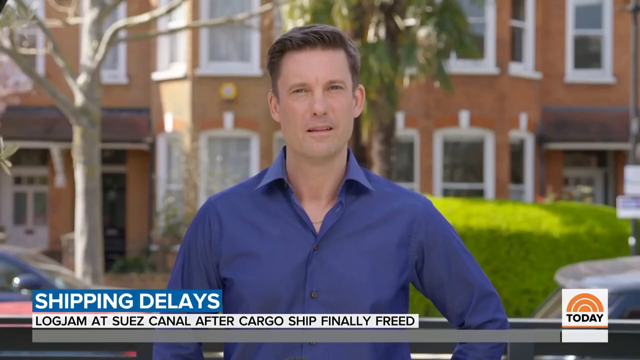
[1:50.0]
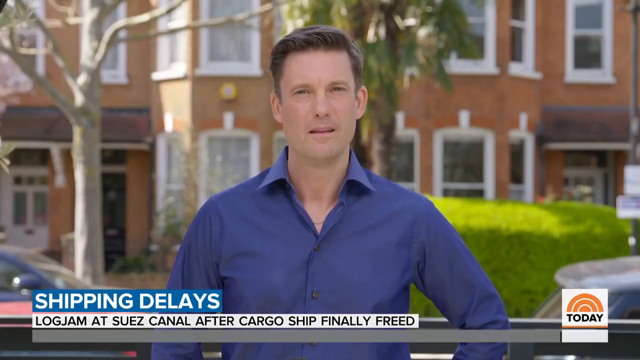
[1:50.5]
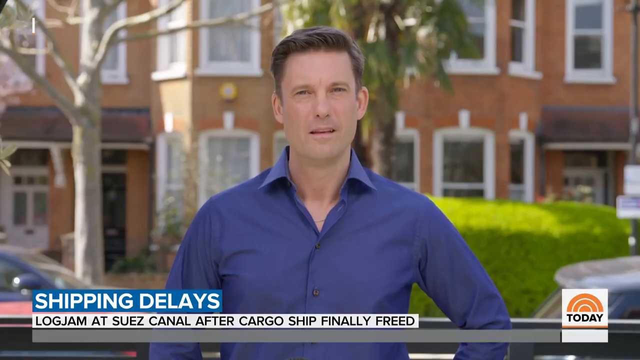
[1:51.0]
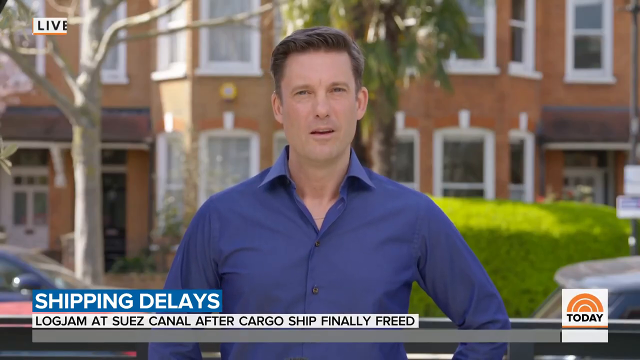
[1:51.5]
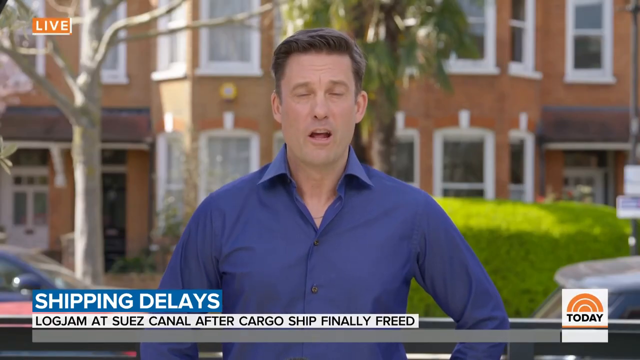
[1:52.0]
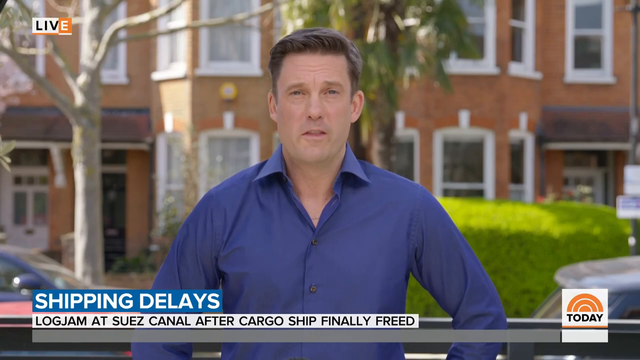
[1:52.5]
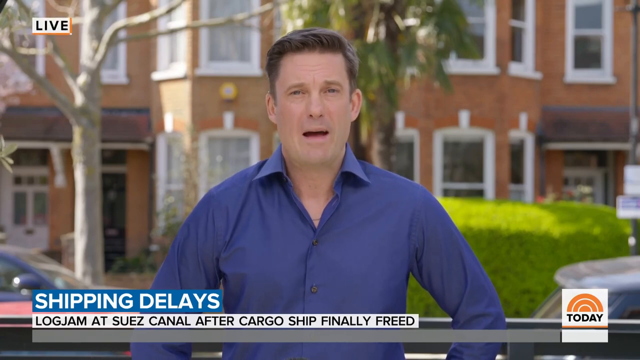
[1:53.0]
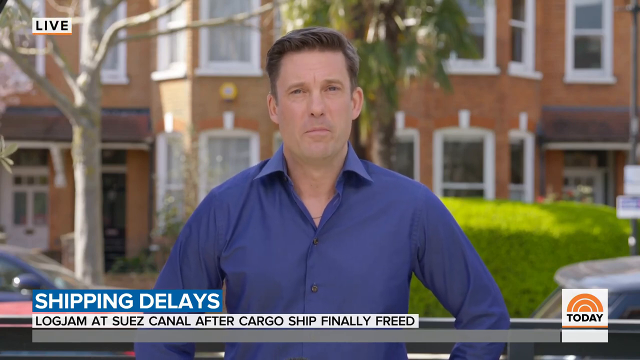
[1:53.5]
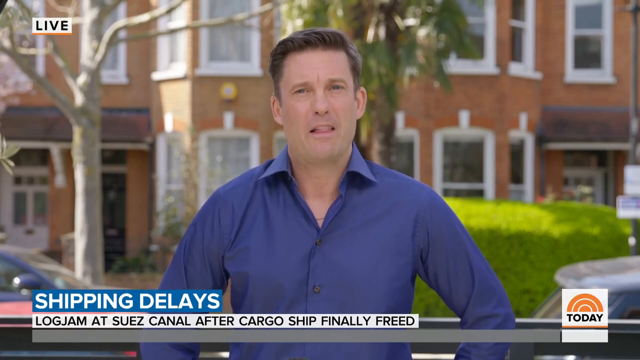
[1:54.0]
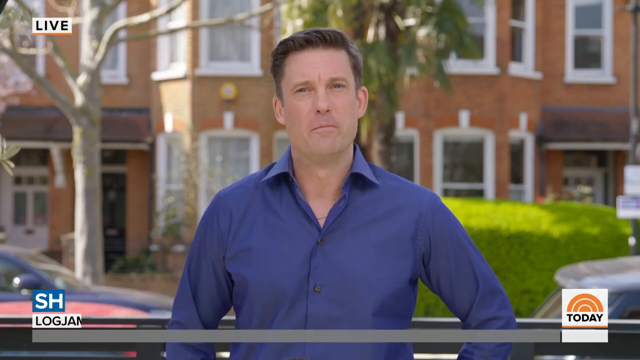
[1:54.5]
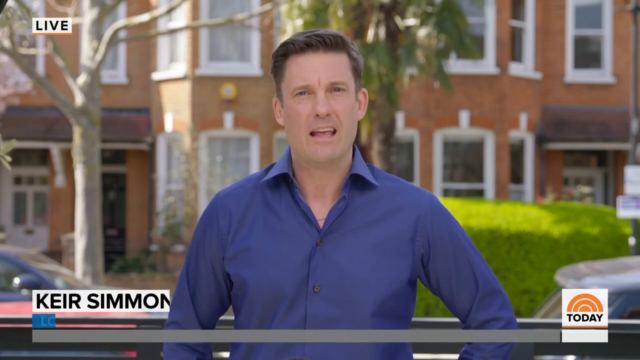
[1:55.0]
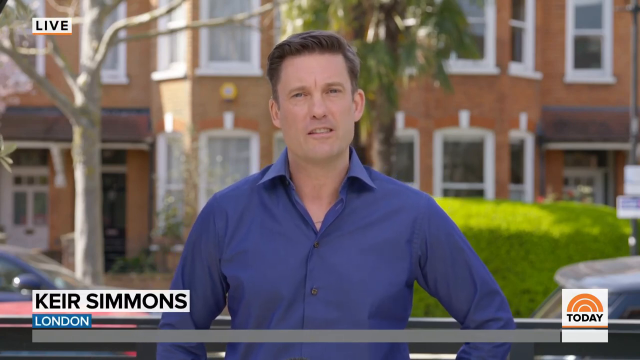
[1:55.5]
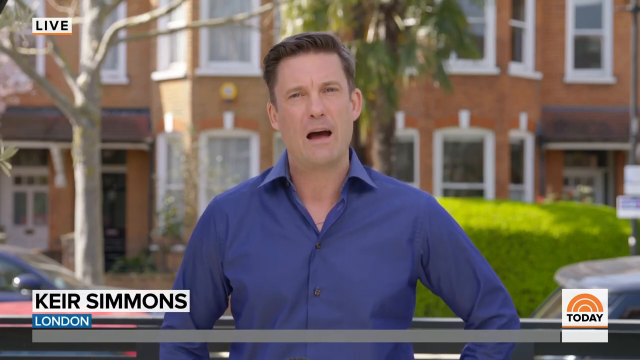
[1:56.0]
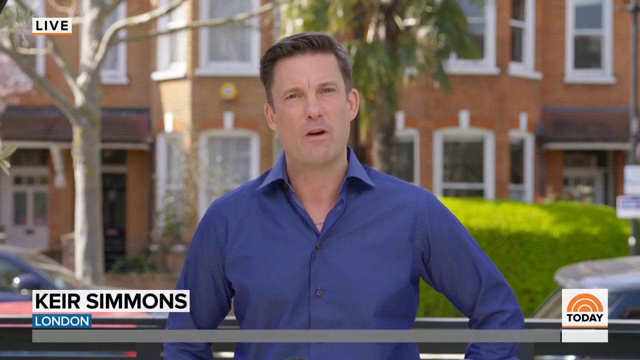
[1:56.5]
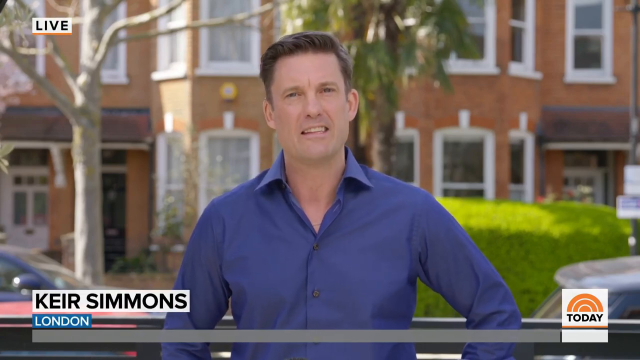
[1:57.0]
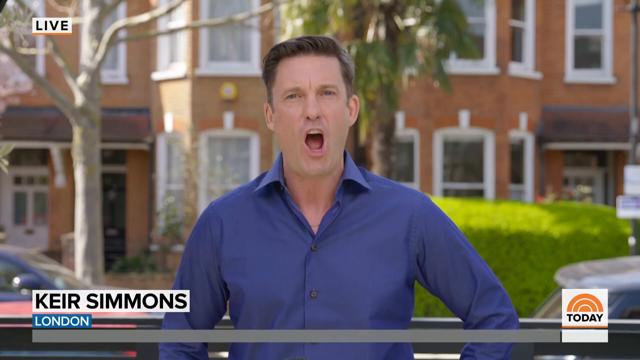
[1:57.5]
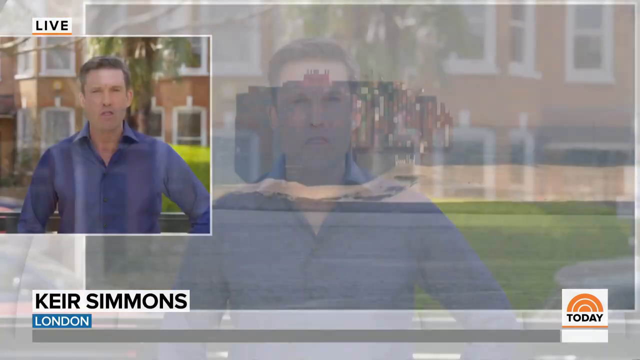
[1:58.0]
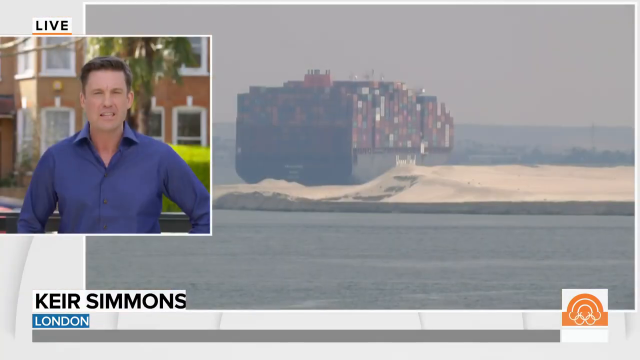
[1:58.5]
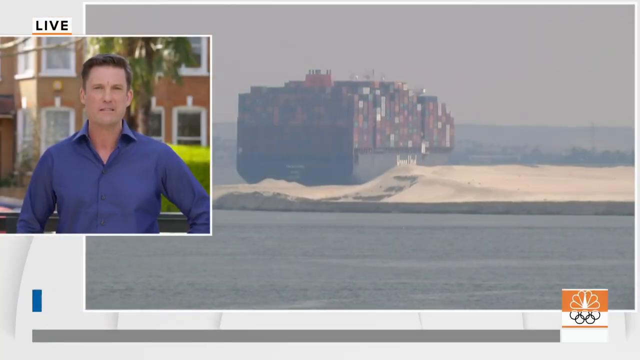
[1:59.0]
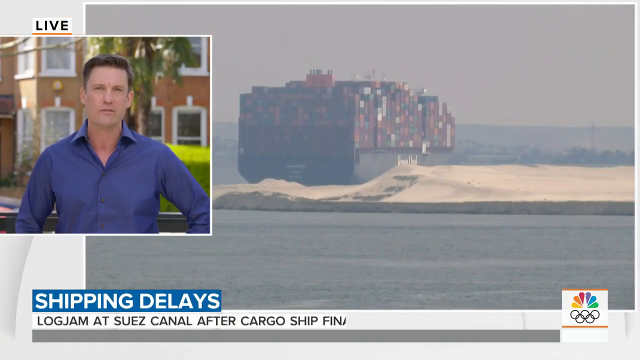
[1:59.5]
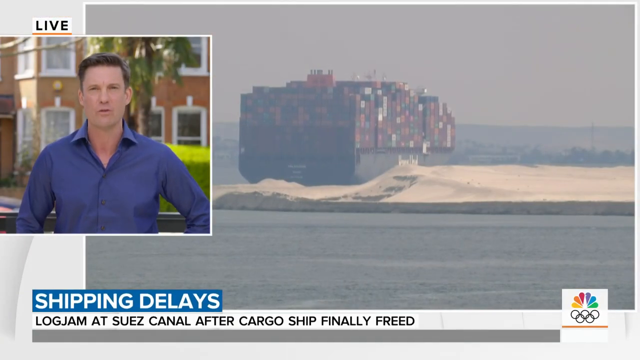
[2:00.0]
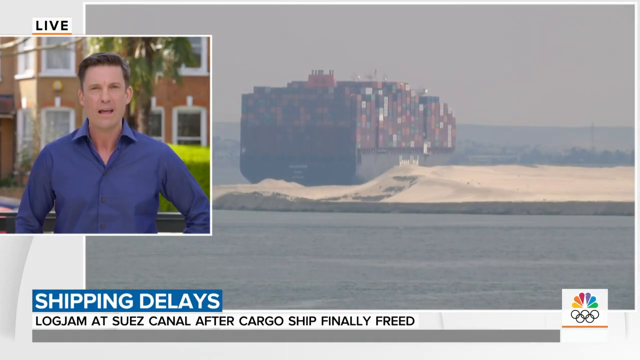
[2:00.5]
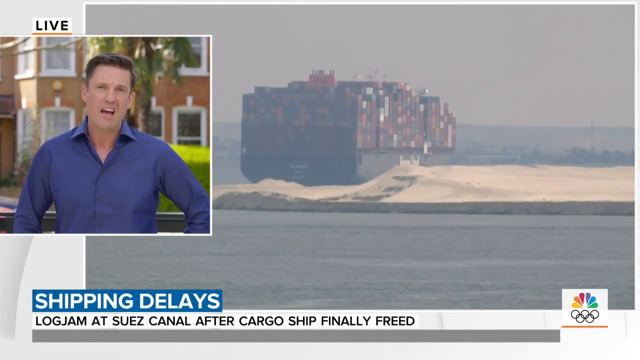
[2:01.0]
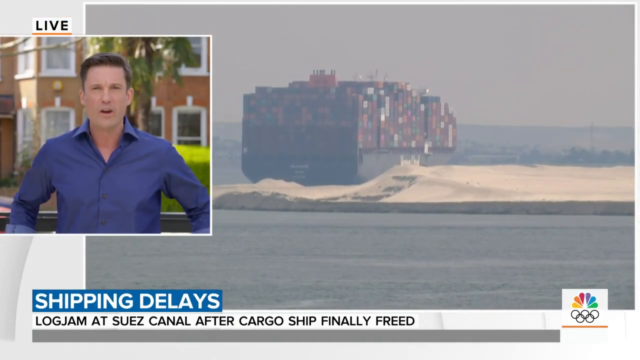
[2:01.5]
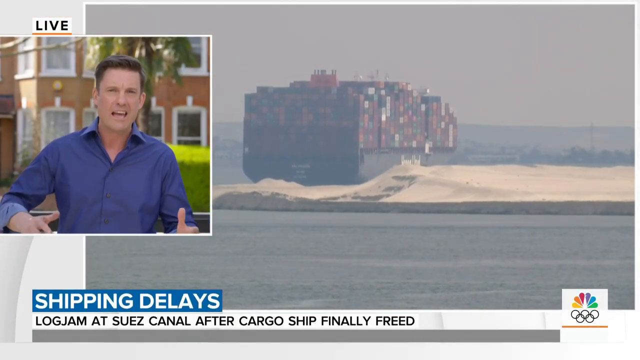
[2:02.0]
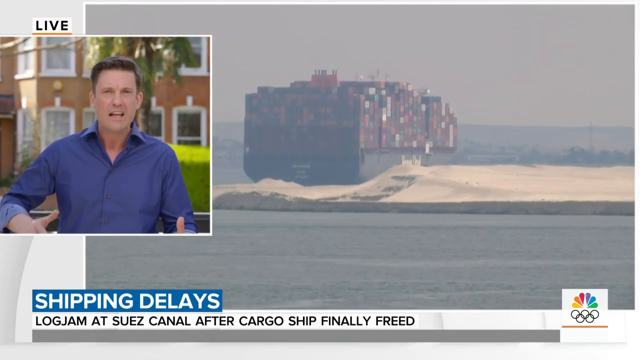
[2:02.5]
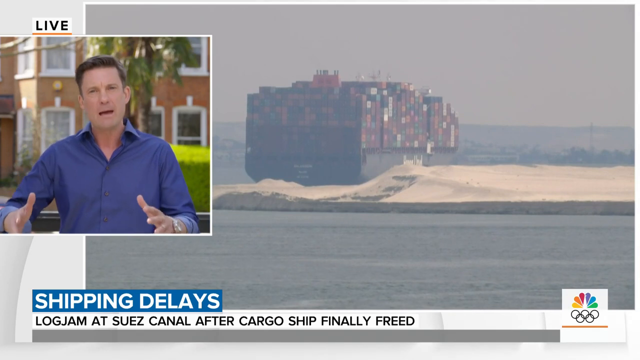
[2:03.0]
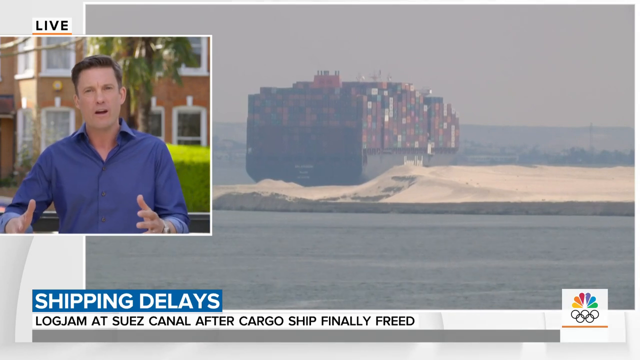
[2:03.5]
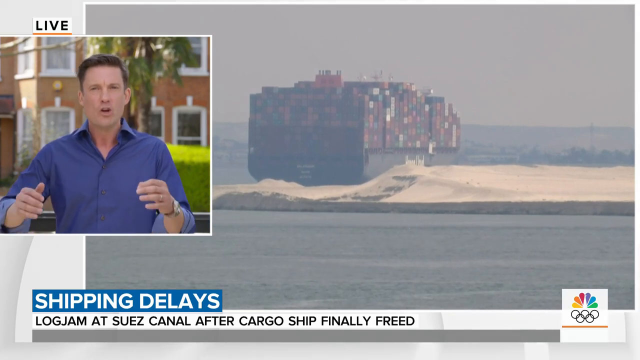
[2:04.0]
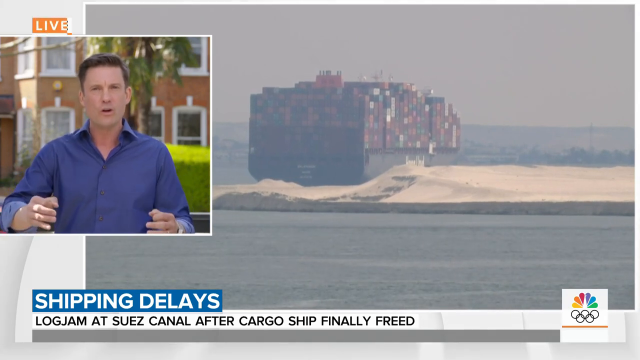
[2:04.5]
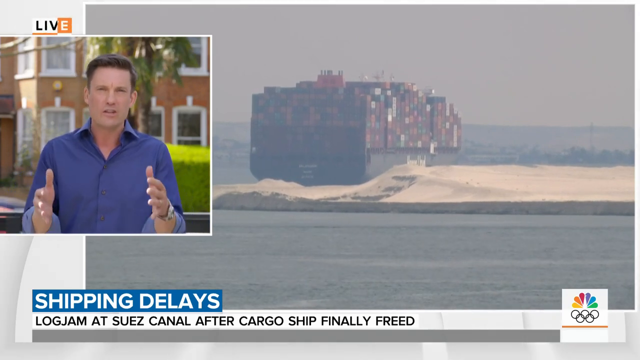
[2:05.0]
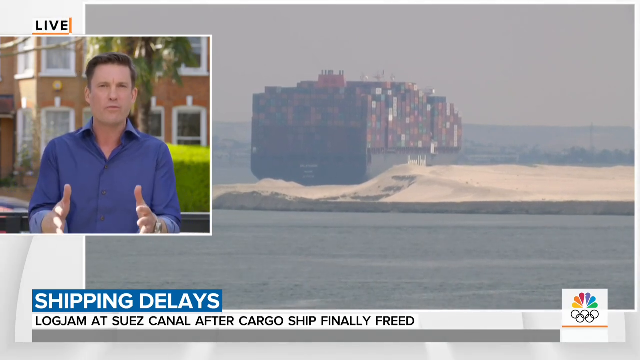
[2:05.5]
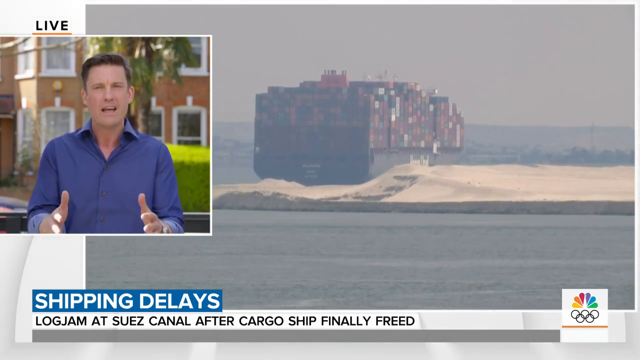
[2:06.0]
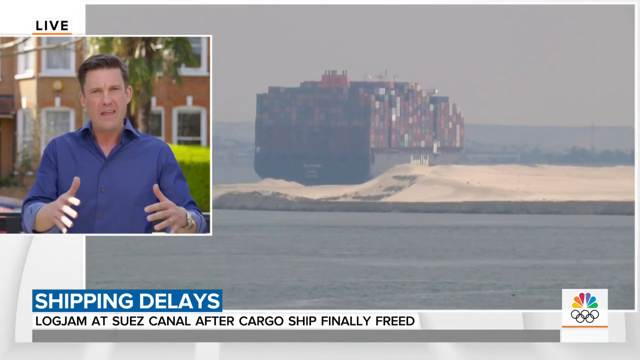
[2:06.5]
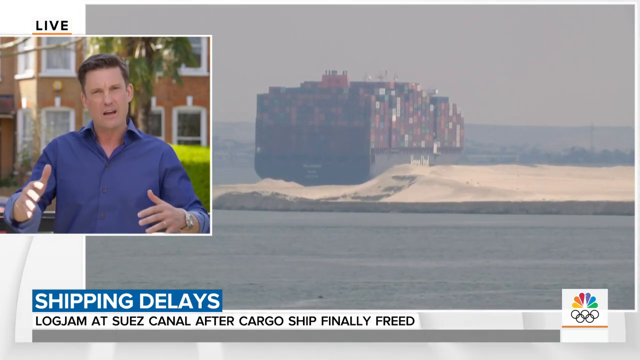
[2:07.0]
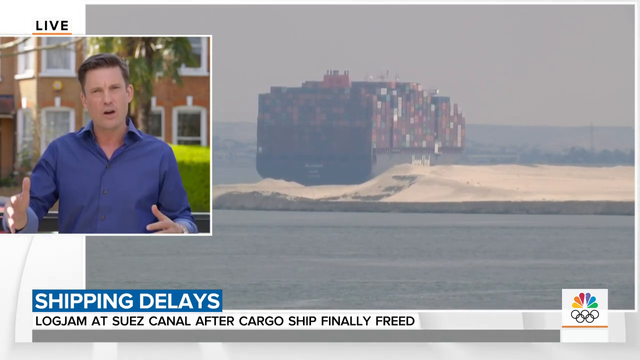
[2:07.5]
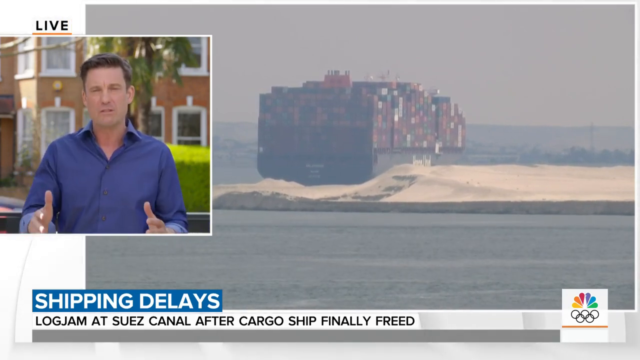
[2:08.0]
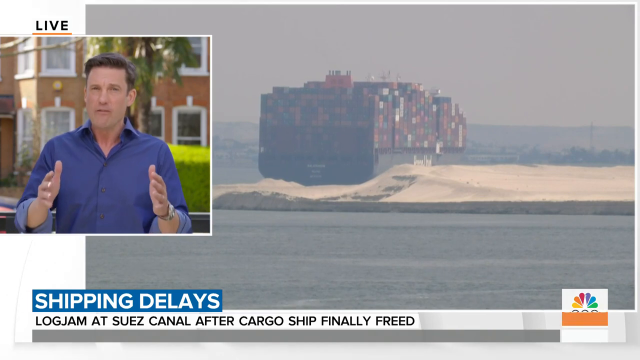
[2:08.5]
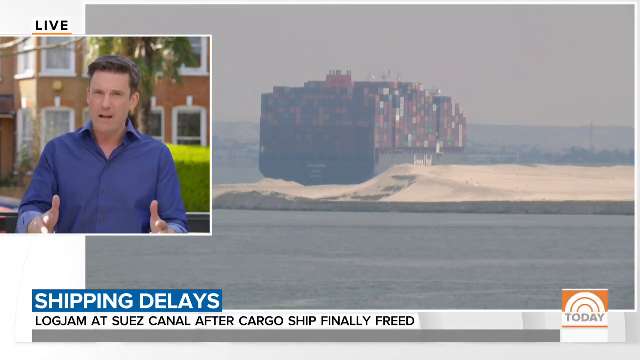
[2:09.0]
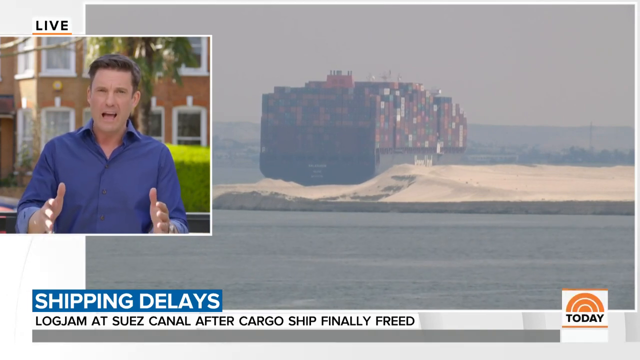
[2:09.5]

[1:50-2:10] The whole screen shows the male reporter from London standing upright. Behind him is a large brown house with many windows, part of a bush in the background, a tree on the left-hand side and part of two vehicles. Seen from the front, he speaks into the camera. He is Kier Simmons, from London; he has shorter hair and appears middle-aged. The view then changes so that he is on the left side, while about 70% of the screen shows a large ship moving slowly through a body of water, seen from behind. The reporter keeps talking, moving his hands from side to side in front of him and then slightly up and down as he gestures while speaking into the camera.